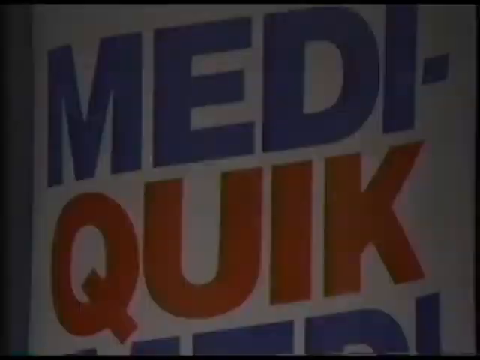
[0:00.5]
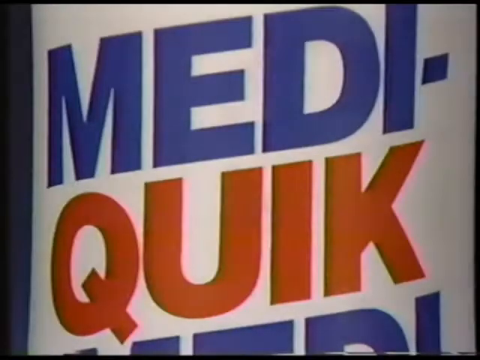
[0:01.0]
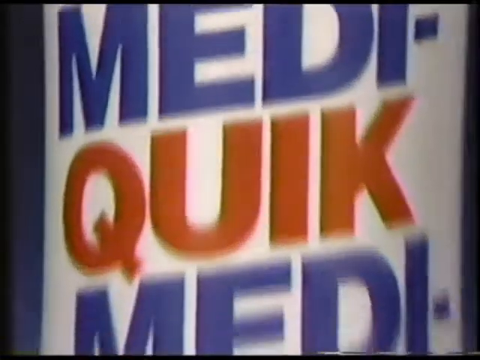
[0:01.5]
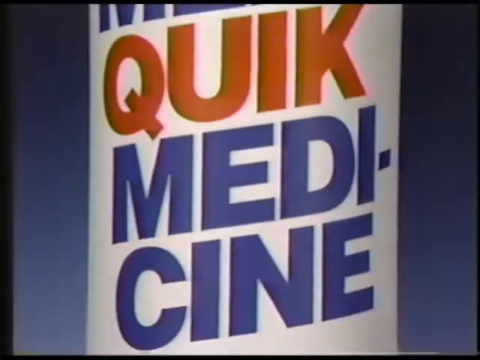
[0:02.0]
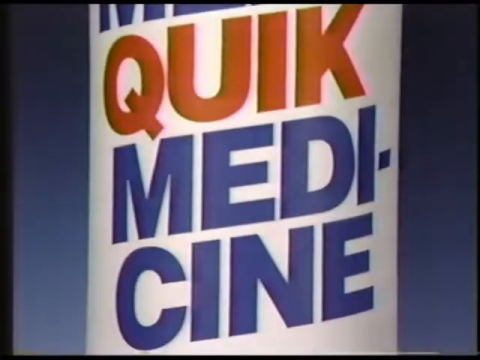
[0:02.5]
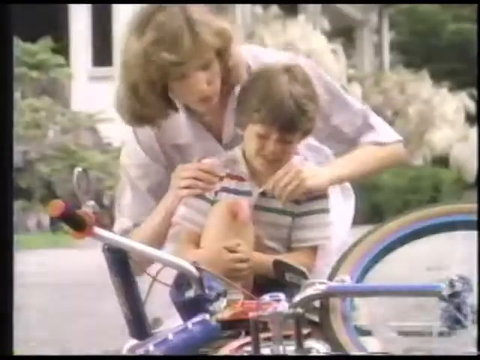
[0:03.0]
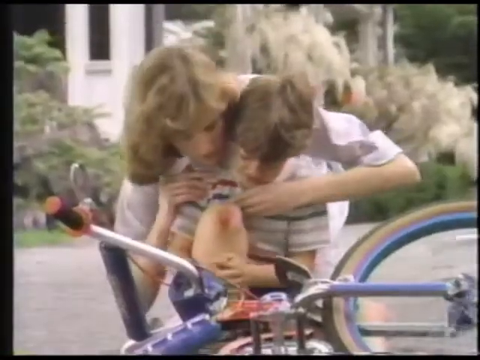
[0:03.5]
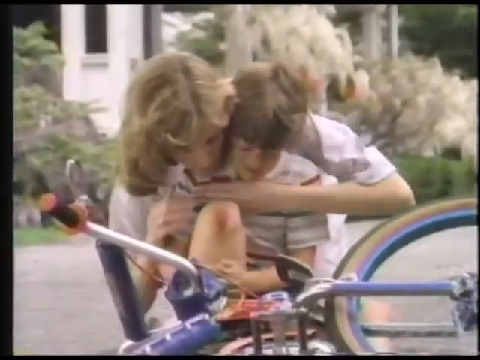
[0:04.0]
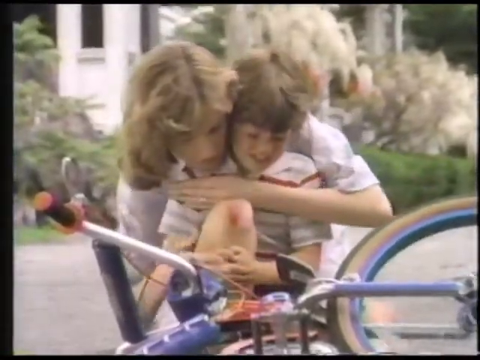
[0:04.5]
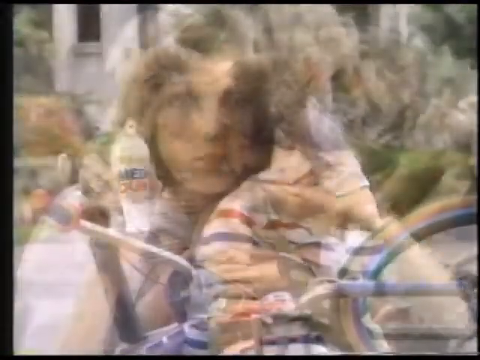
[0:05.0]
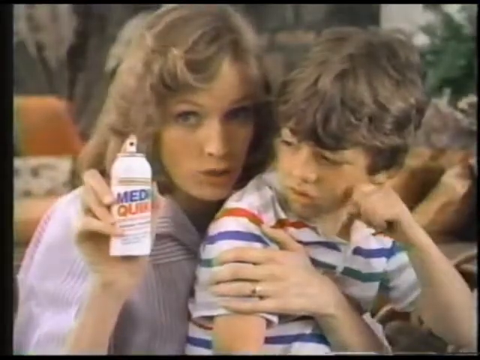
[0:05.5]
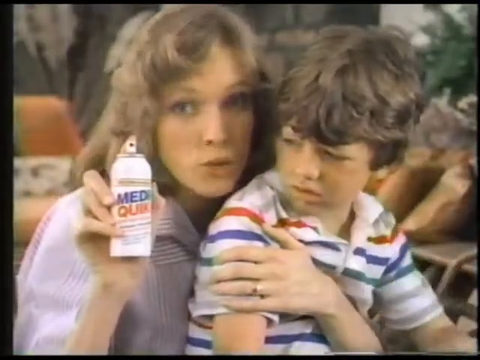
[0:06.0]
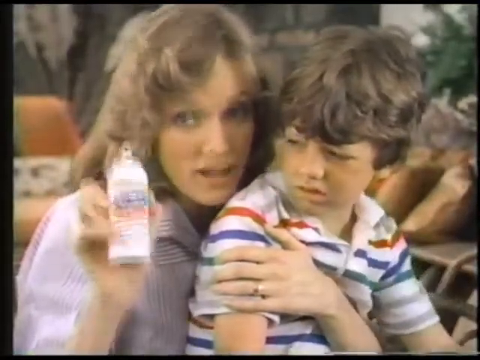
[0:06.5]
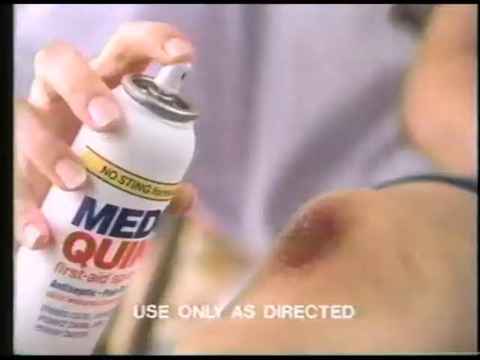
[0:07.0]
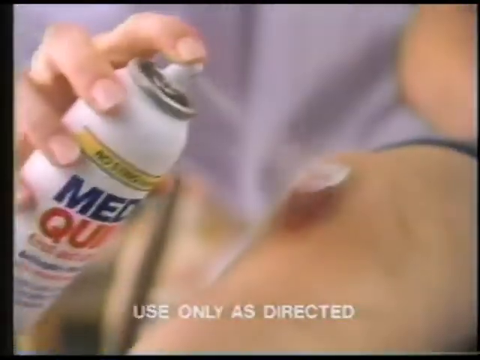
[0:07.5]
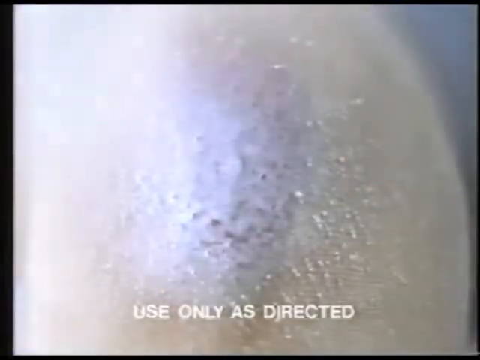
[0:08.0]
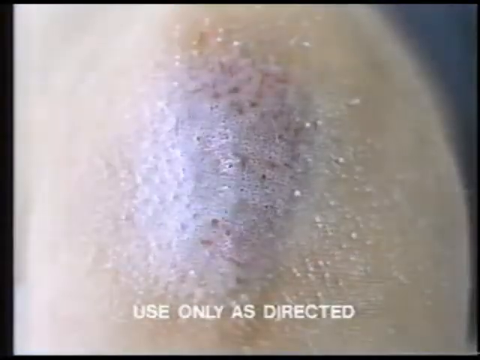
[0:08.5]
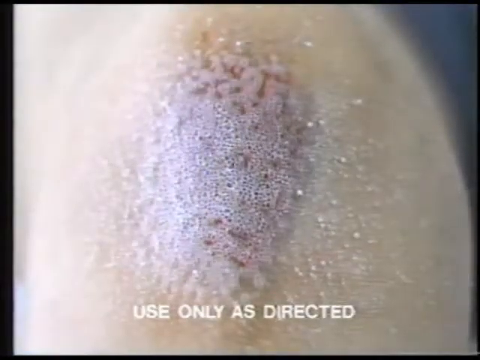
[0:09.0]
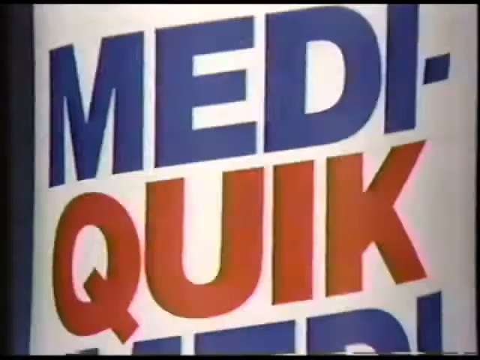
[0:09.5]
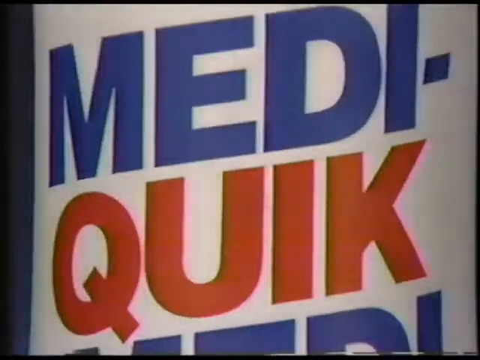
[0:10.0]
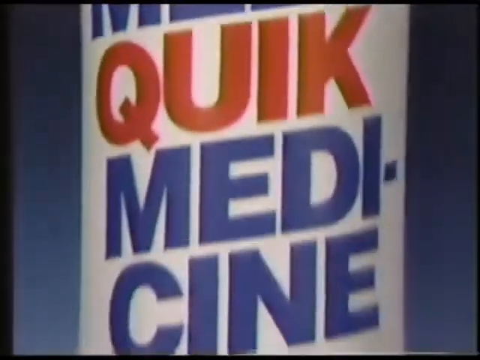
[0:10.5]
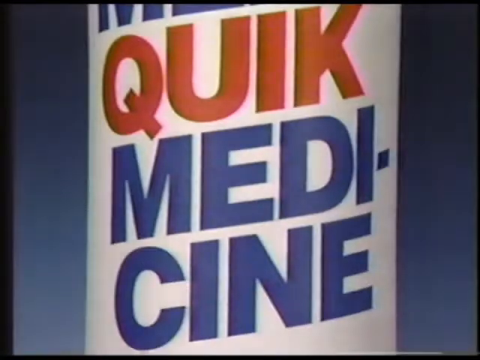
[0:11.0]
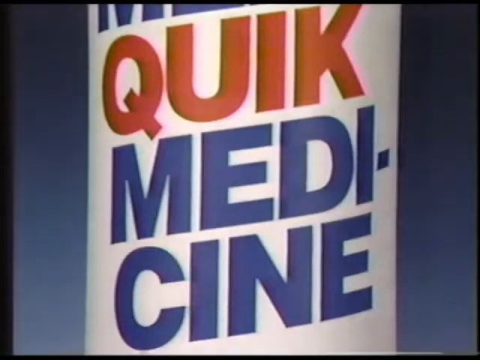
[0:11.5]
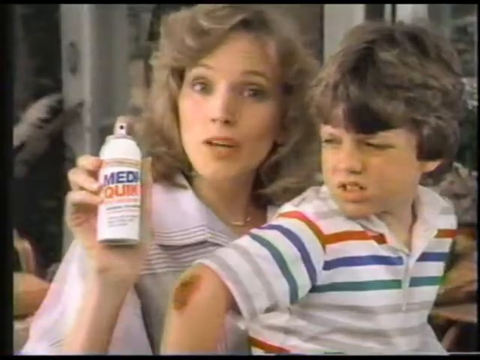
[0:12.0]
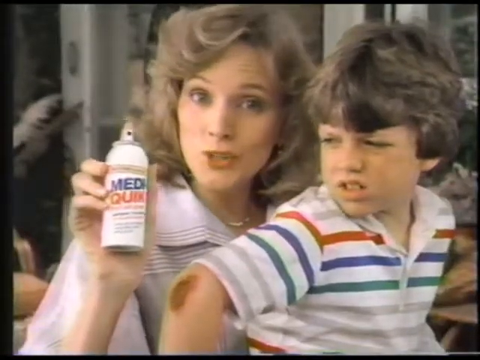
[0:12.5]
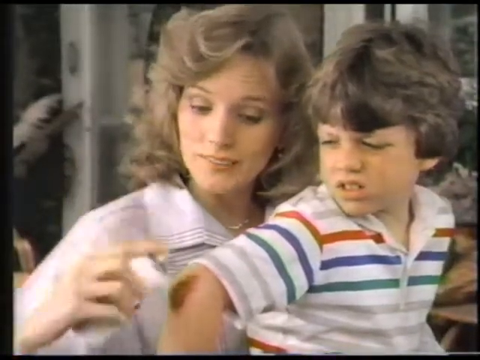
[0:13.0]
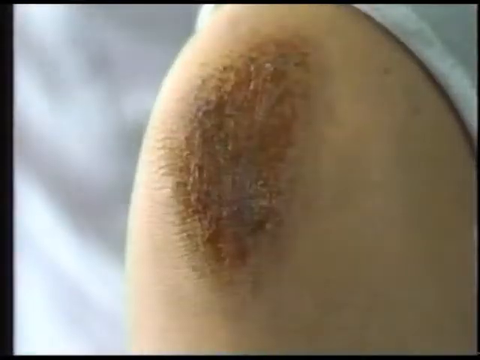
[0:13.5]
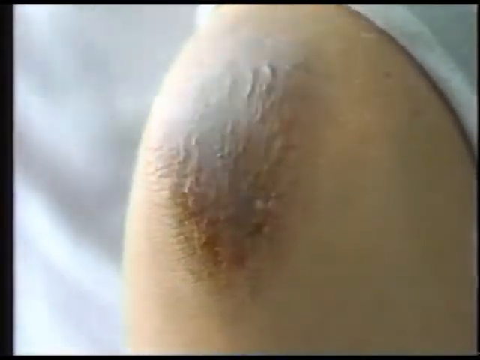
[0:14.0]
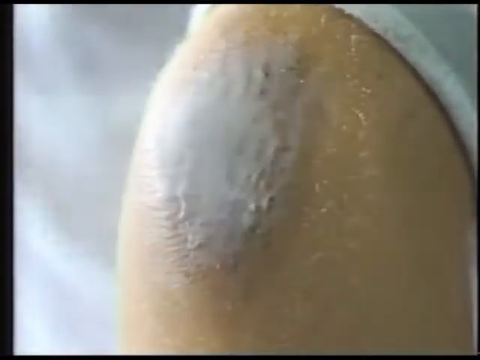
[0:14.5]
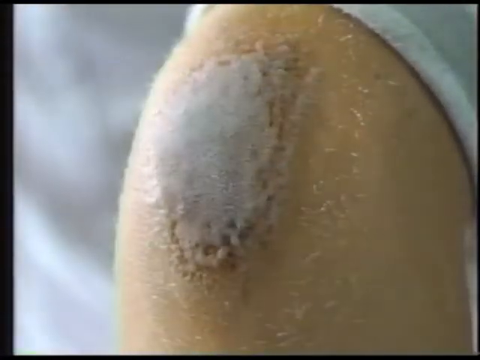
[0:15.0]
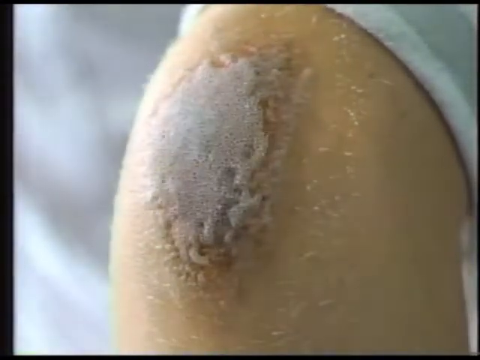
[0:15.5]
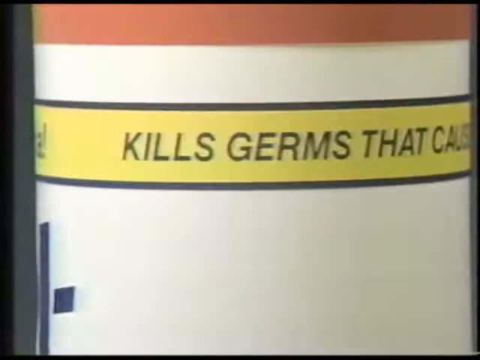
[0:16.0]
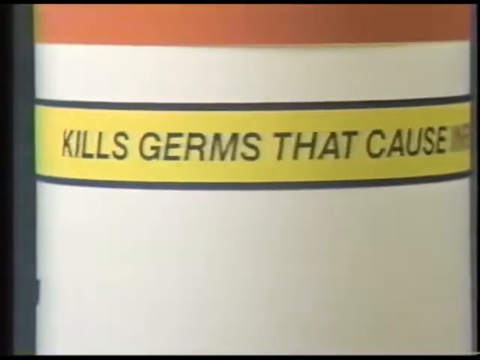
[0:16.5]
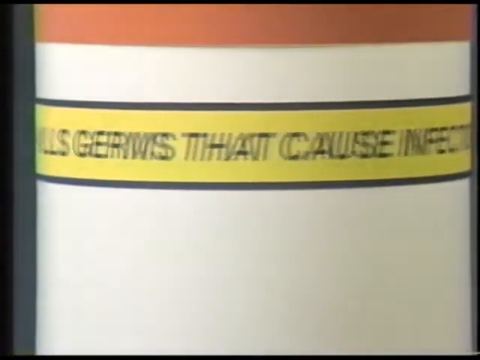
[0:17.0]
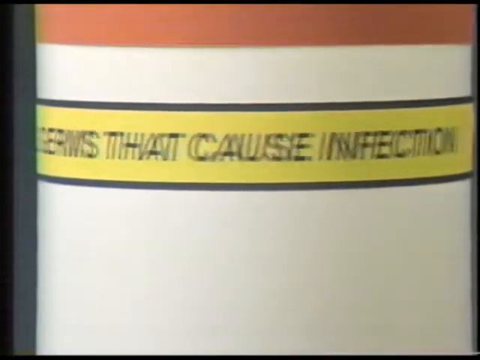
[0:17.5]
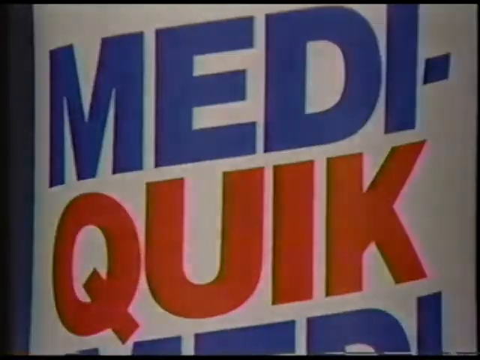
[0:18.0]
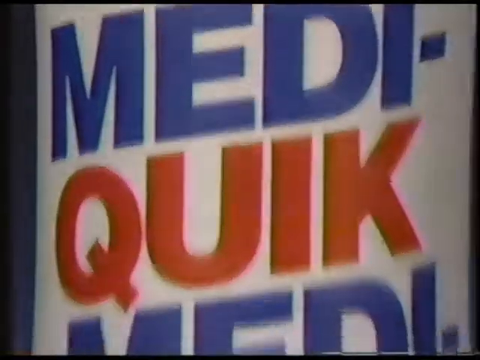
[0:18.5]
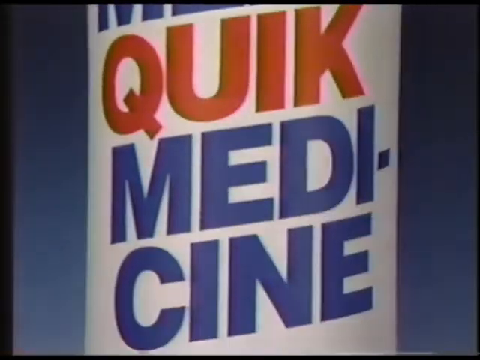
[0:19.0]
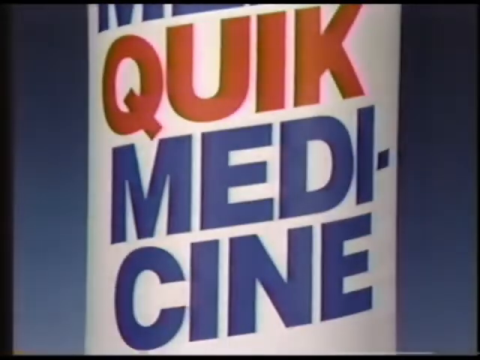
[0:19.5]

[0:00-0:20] This looks to be a commercial from long ago, maybe from the 80s or 90s. It shows "Mediquik", which seems to be the name of the product, and then kind of zooms out on the full product. A little boy seems to have fallen from a bicycle; he is on the ground with a big gash on his knee, and his mother is holding him around his chest. In the next scene she is holding the medicine, which looks to be a little spray bottle labeled "Mediquik". She is talking and sprays it onto the injured part of his knee, and a white foam comes out. Text at the bottom says "used only as directed". A close-up of the boy's knee shows the white foaming particles covering the gash and kind of bubbling. The "Mediquik" title is shown again, followed by another close-up of her putting it on his elbow, with the foaming stuff visible. Then the side of the bottle is shown, saying "kills germs that cause infection".